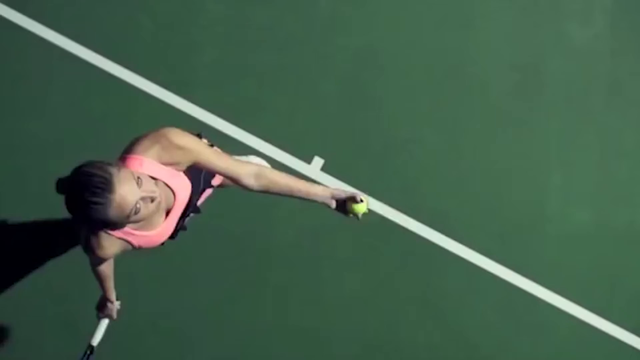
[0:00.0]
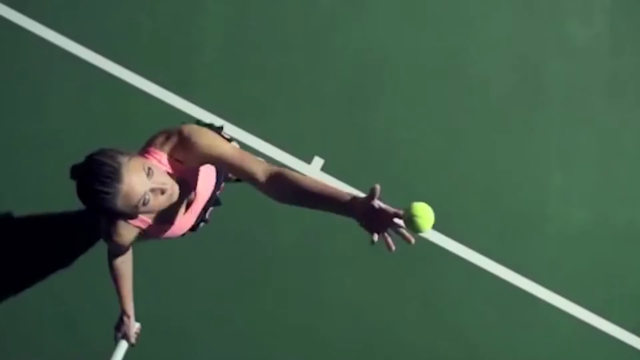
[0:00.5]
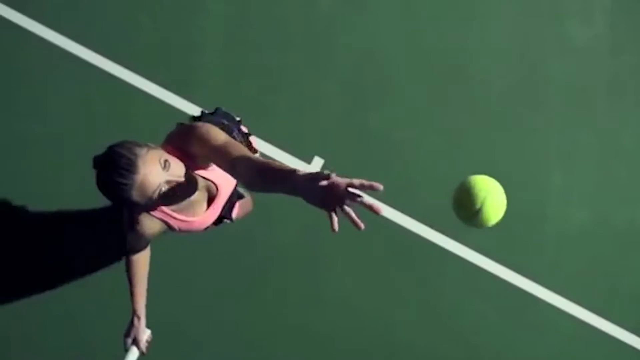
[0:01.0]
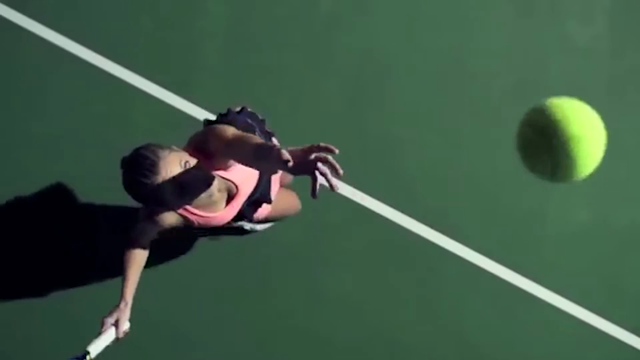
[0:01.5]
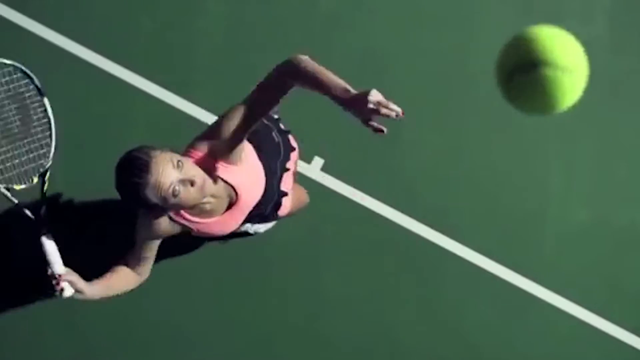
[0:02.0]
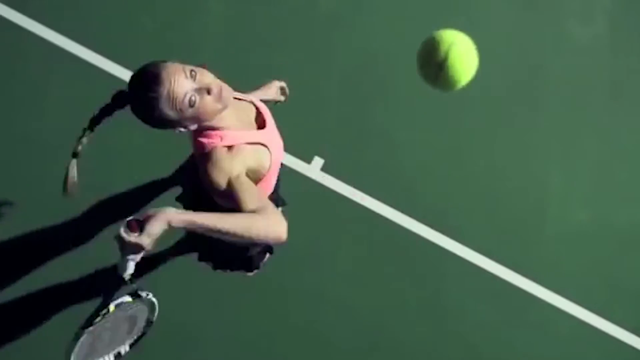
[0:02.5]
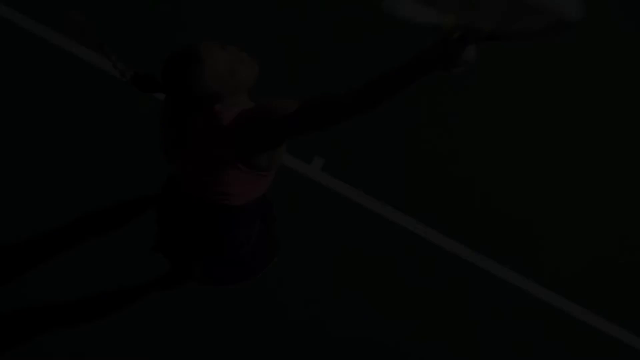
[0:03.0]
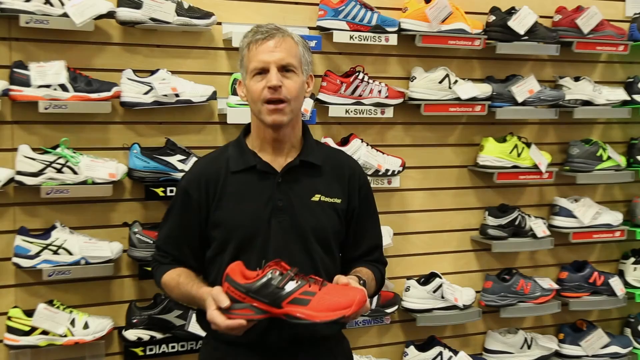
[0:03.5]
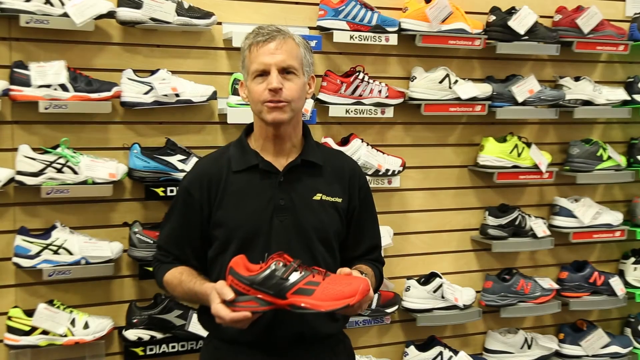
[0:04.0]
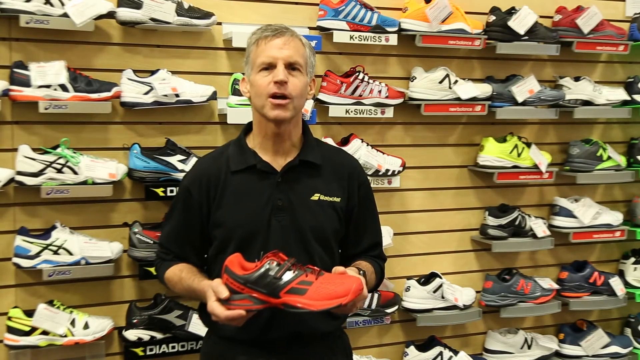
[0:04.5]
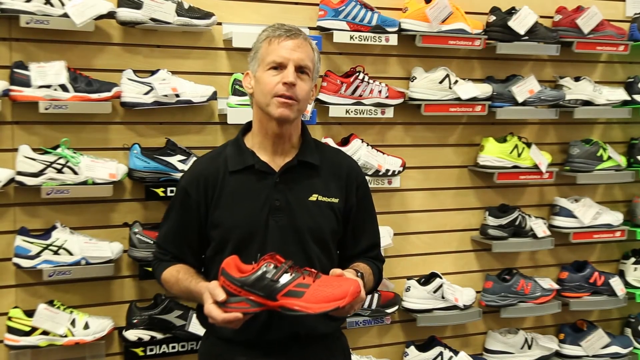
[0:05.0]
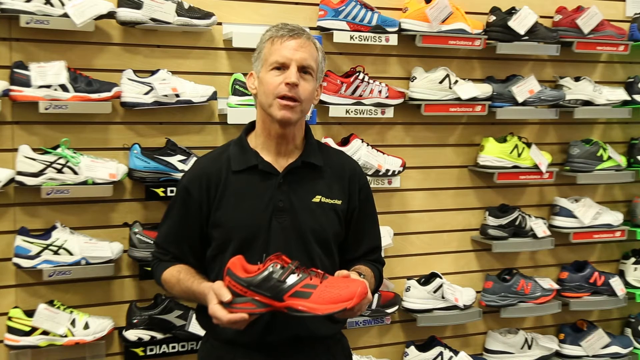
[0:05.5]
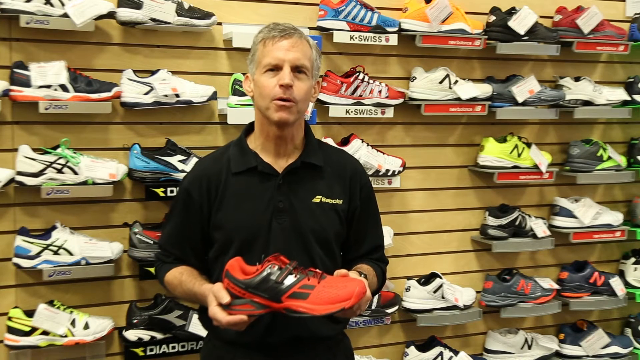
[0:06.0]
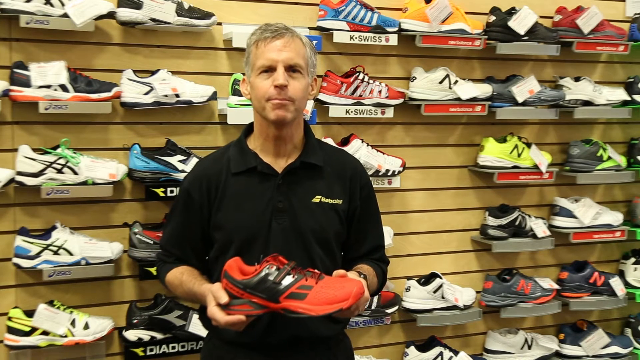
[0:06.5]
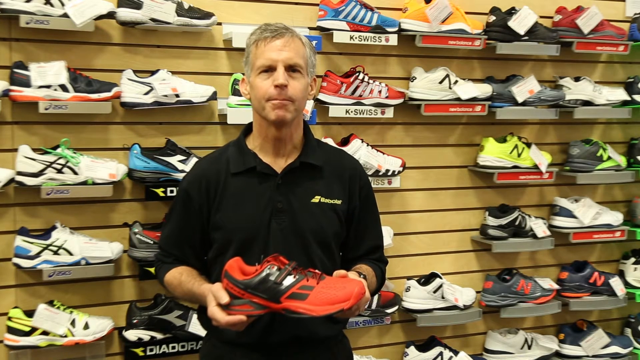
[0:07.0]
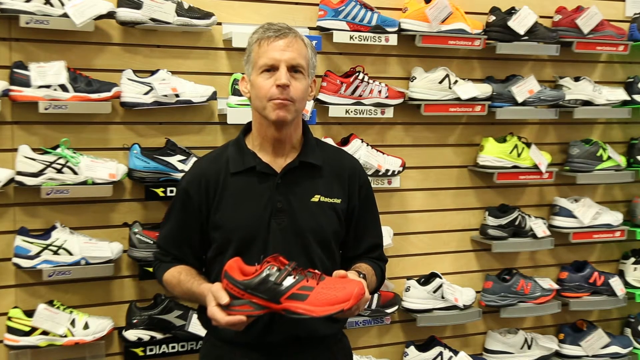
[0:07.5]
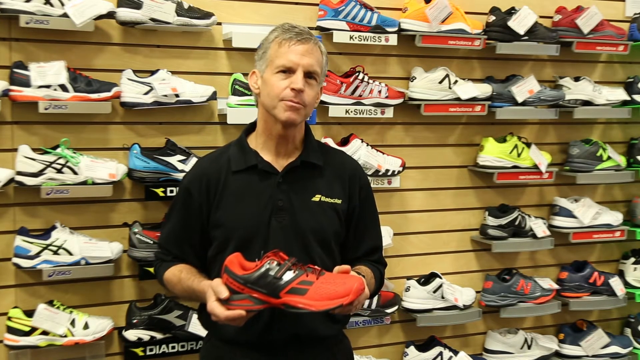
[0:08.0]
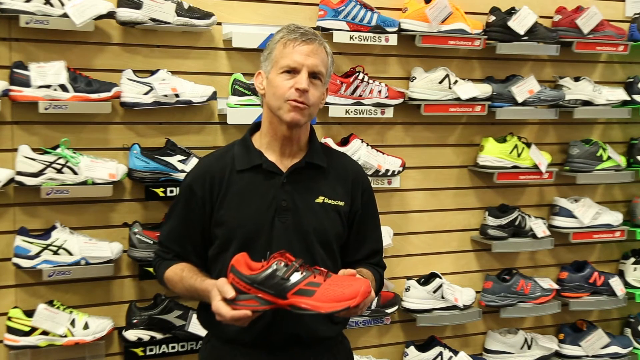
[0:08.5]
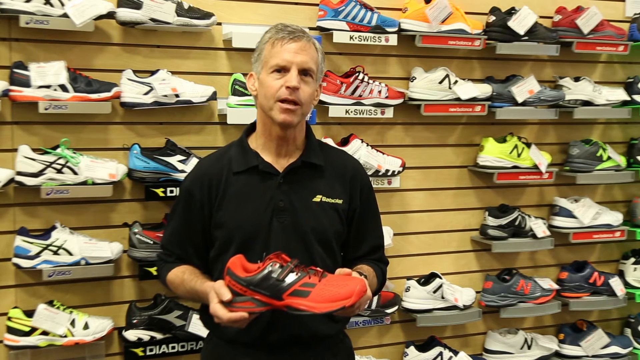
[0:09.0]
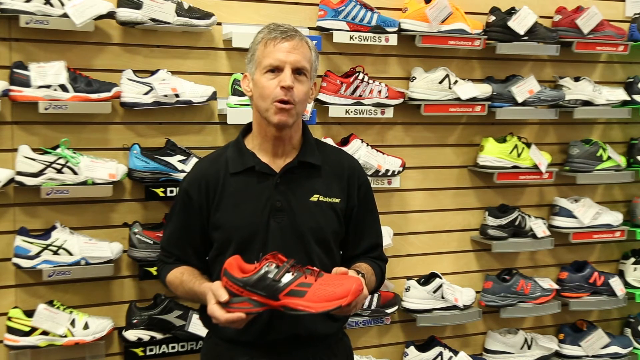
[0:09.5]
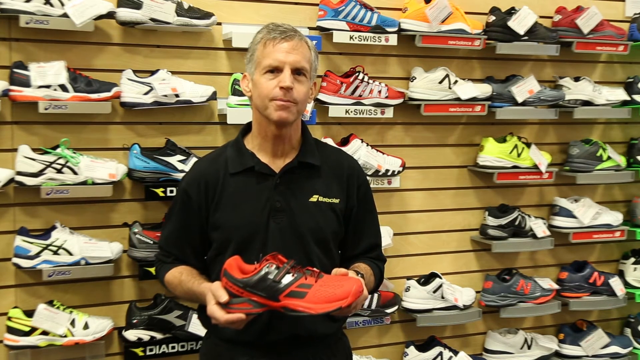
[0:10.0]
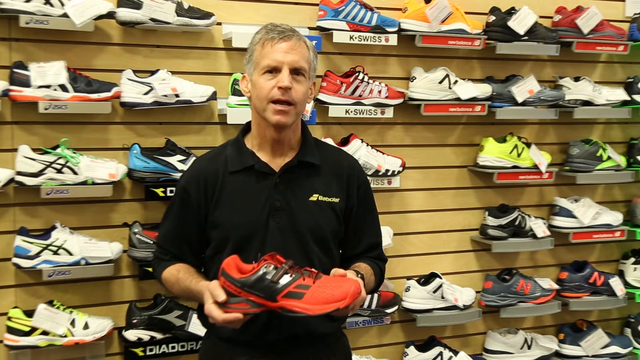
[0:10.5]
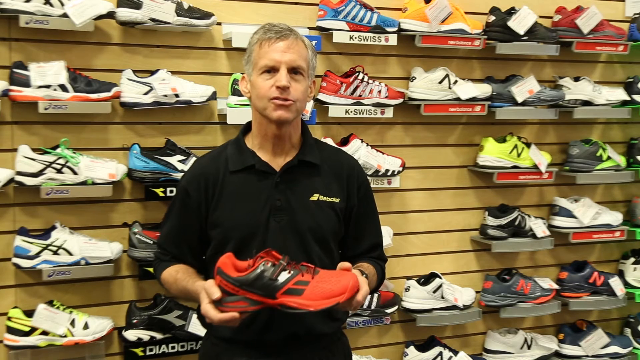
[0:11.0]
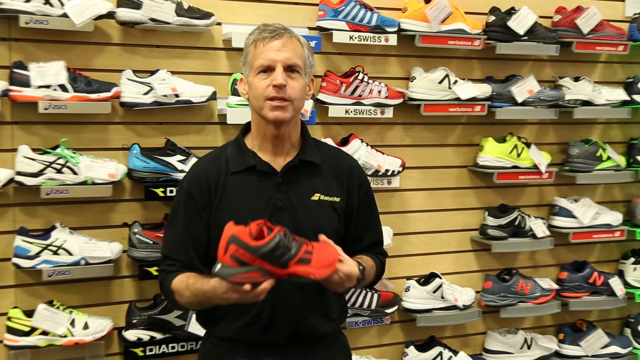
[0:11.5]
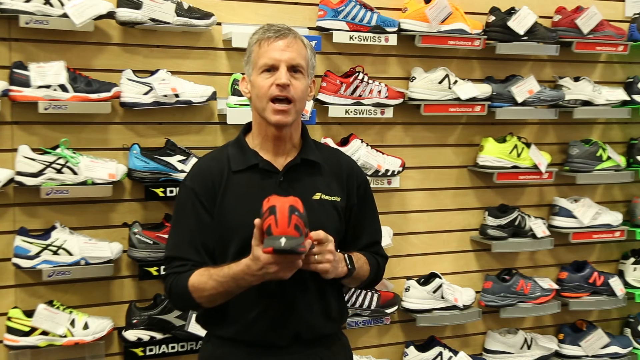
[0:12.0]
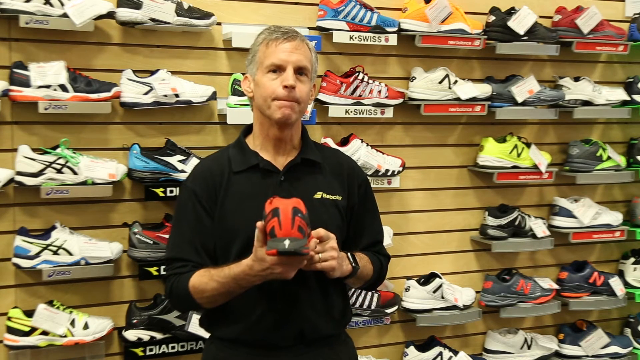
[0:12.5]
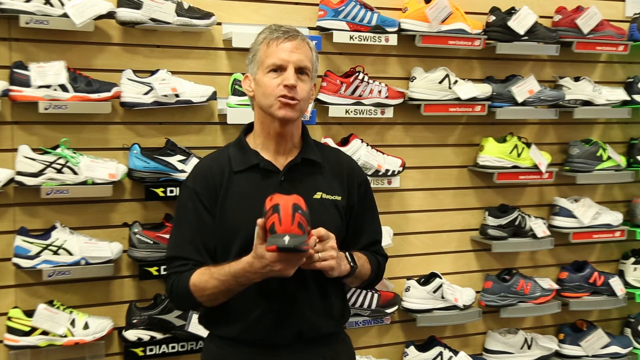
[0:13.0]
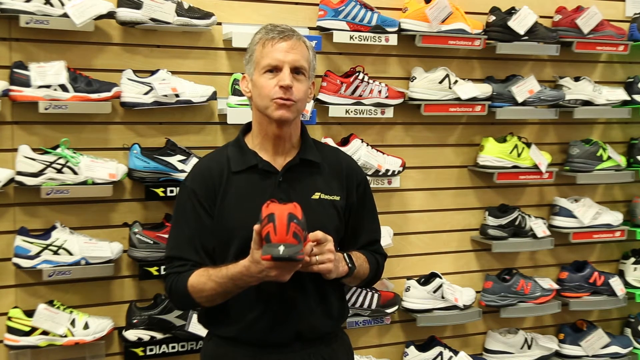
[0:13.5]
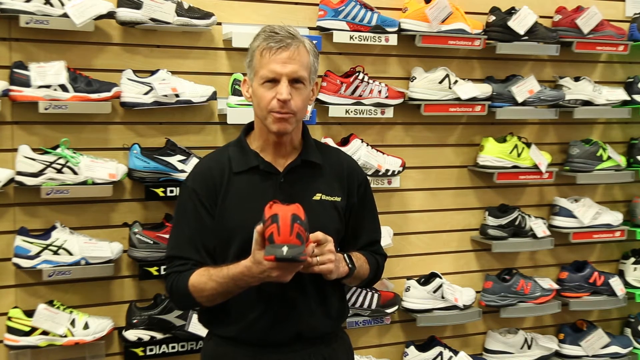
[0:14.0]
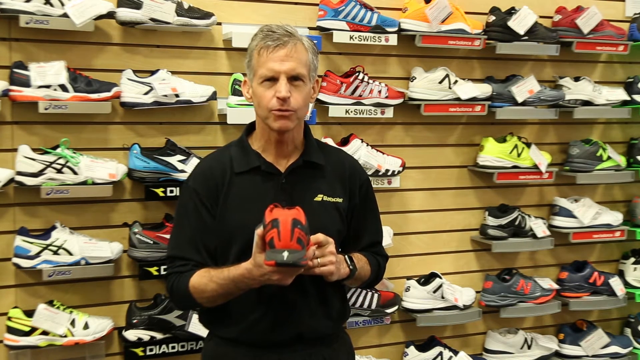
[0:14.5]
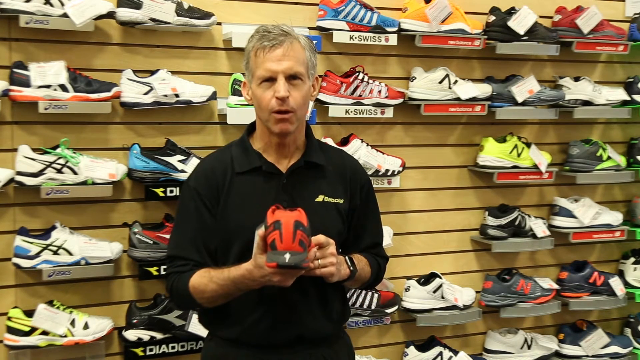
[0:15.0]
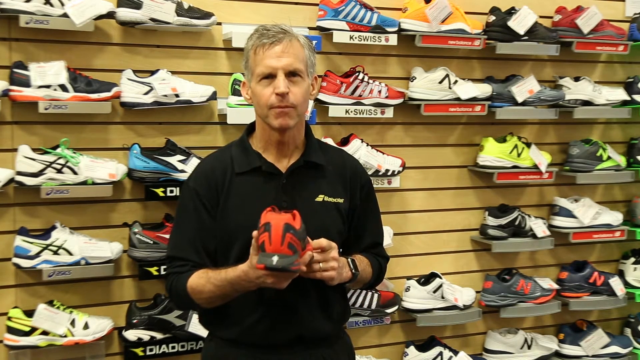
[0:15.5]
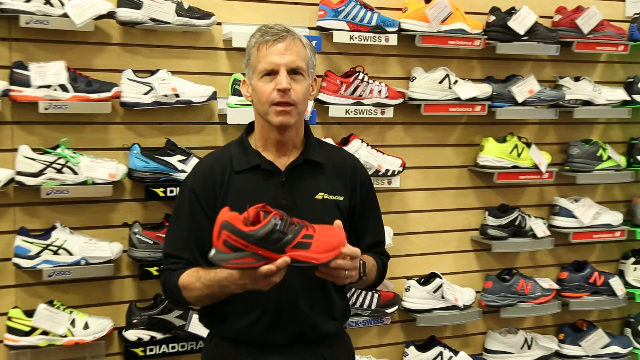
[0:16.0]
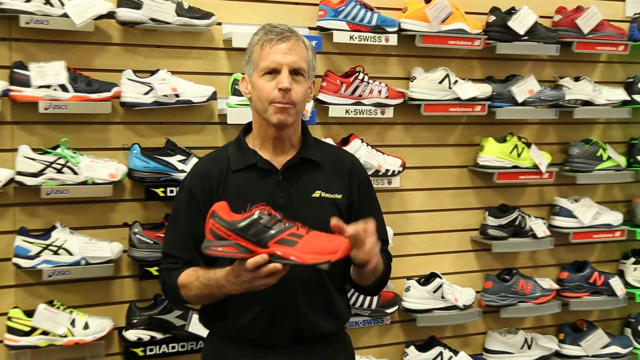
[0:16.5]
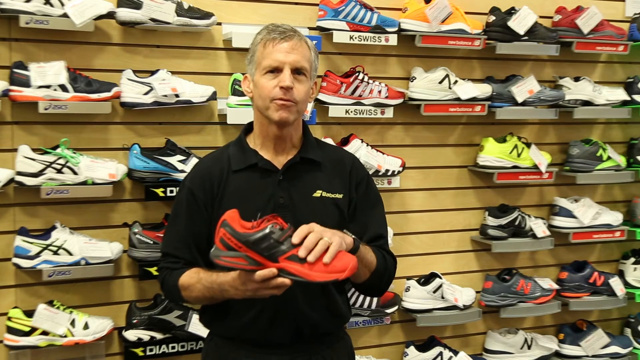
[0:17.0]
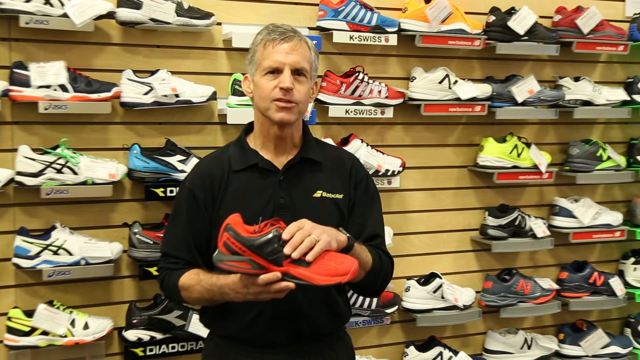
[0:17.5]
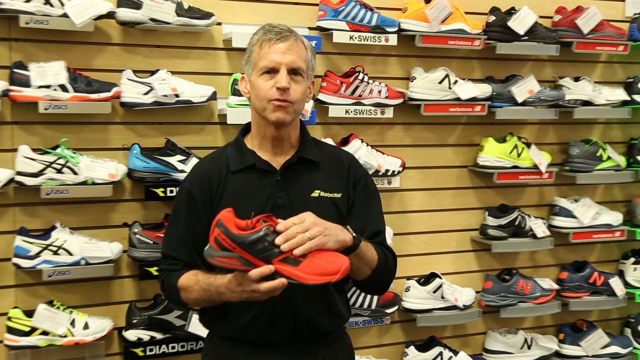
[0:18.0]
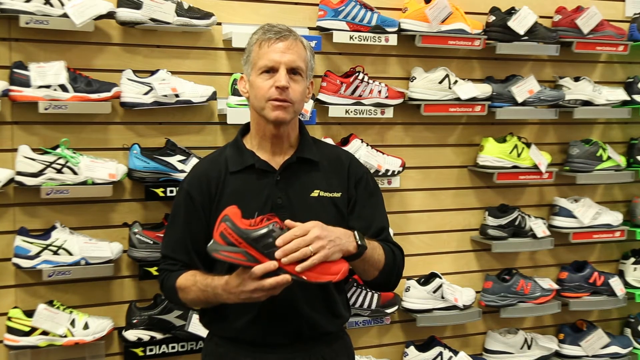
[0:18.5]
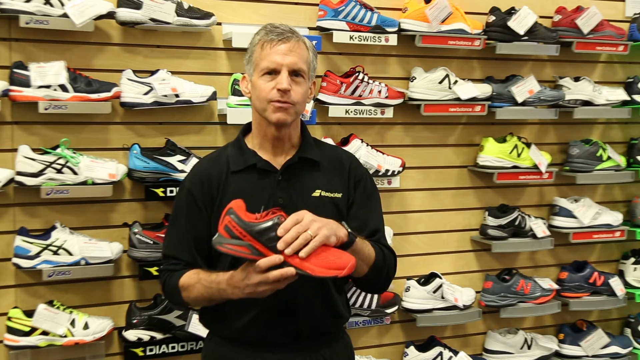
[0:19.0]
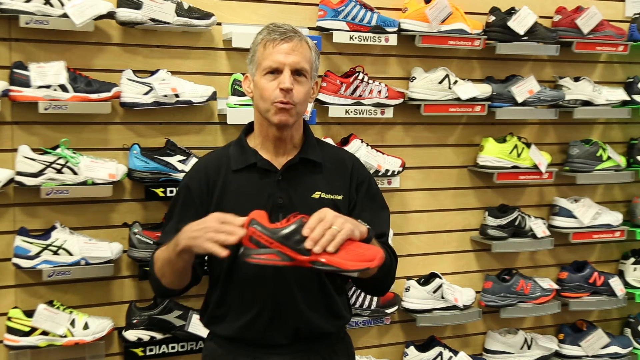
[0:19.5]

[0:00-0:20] An overhead shot shows a female tennis player throwing a tennis ball up in the air with her left hand and then hitting it with a tennis racket in her right hand. The scene then changes to a man standing in front of a wall with athletic shoes on display. The wall's background looks like horizontal wooden strips, and the shoes are displayed on small plastic shelves, all seen from the side. The man wears a short-sleeved black collared shirt and holds a red and black athletic shoe in his hand as he speaks to the camera. As he speaks, he turns the shoe around so that the back of the shoe and the heel are visible; the heel appears to have a small cross on the back. He turns the shoe back around and grips it with both hands, on the top and on the back.